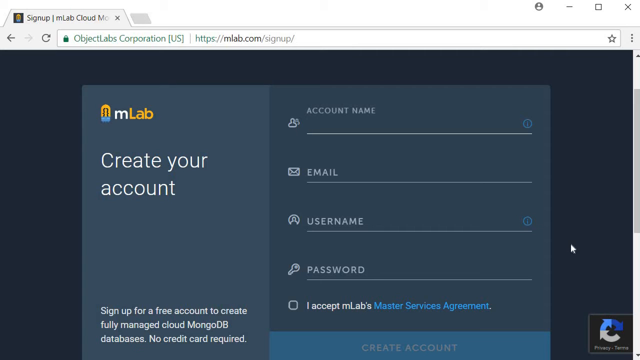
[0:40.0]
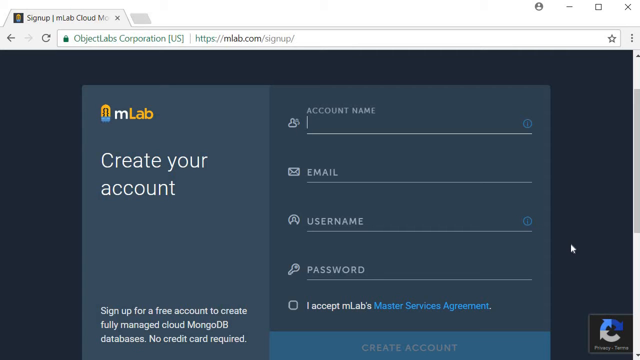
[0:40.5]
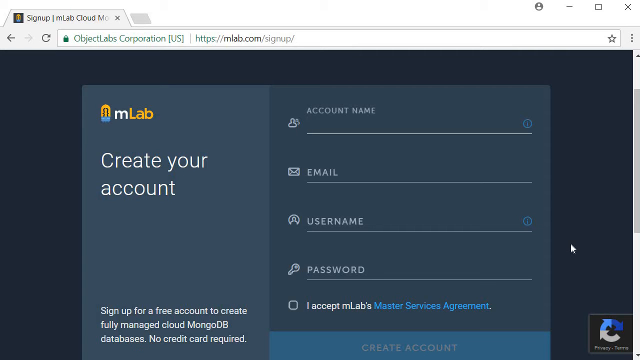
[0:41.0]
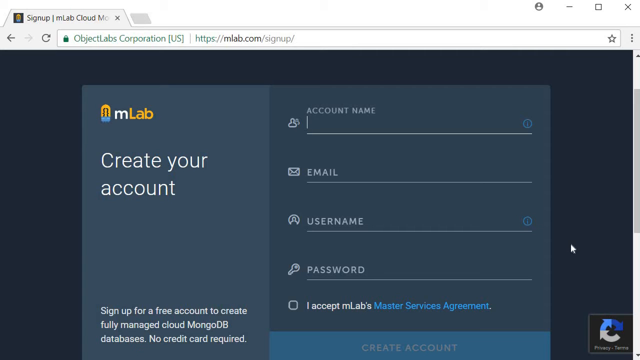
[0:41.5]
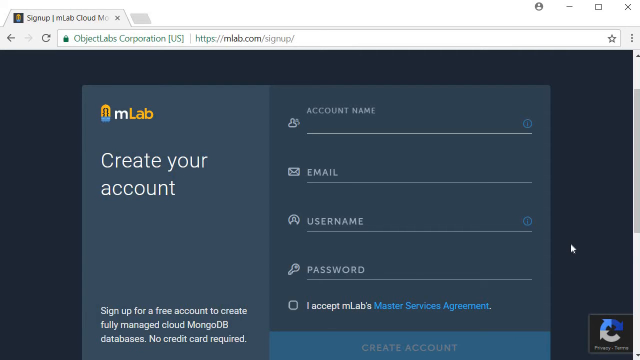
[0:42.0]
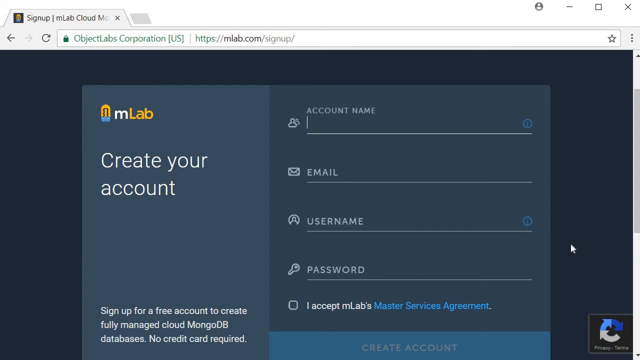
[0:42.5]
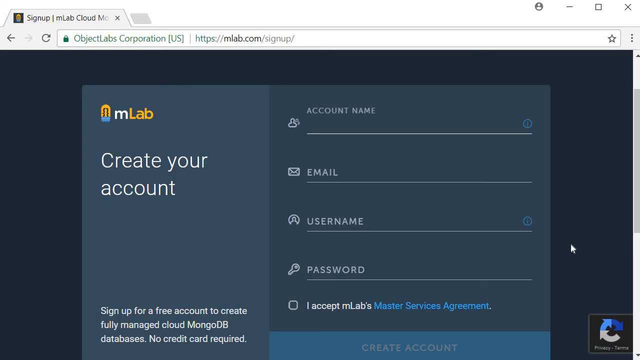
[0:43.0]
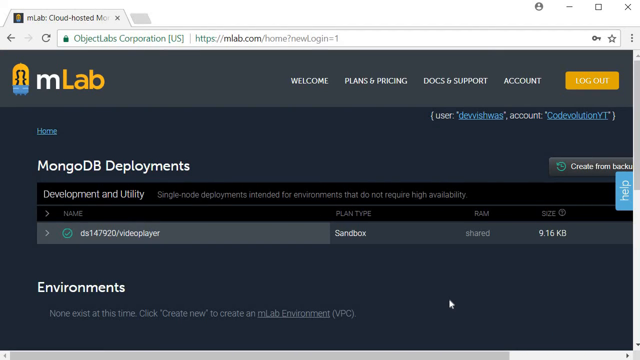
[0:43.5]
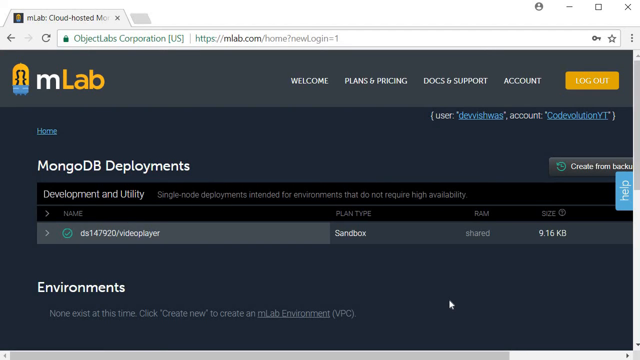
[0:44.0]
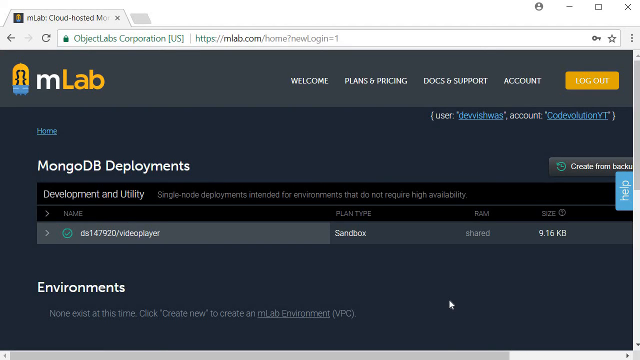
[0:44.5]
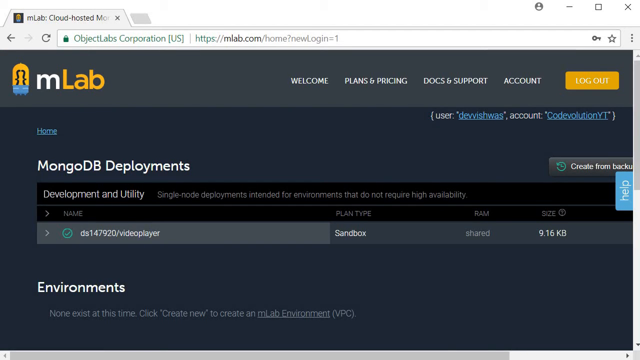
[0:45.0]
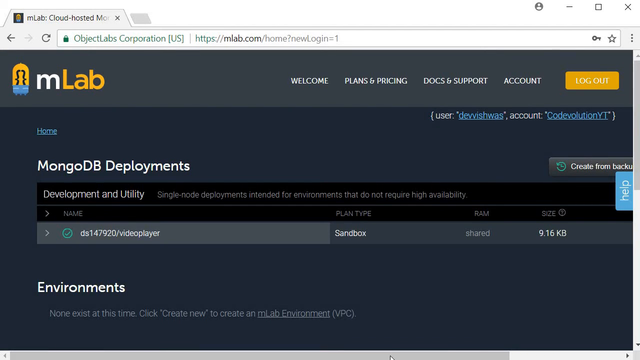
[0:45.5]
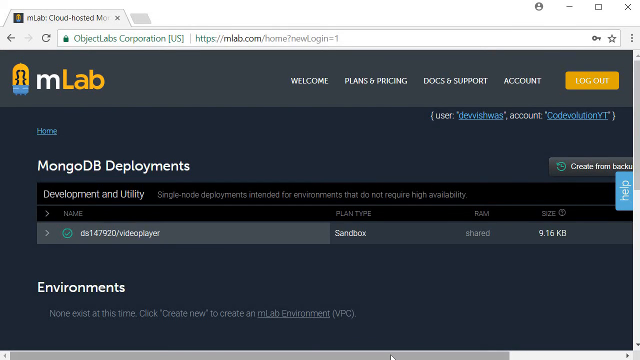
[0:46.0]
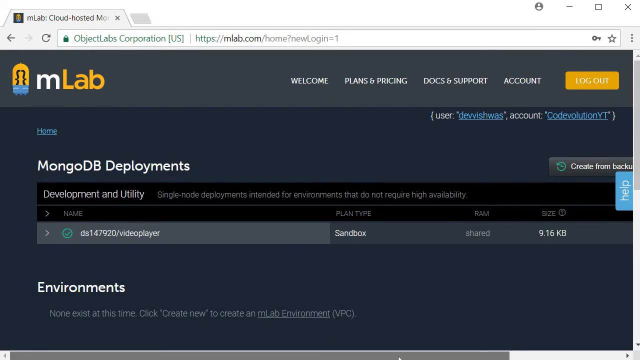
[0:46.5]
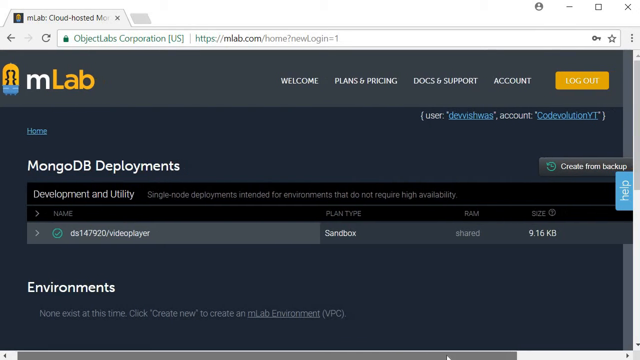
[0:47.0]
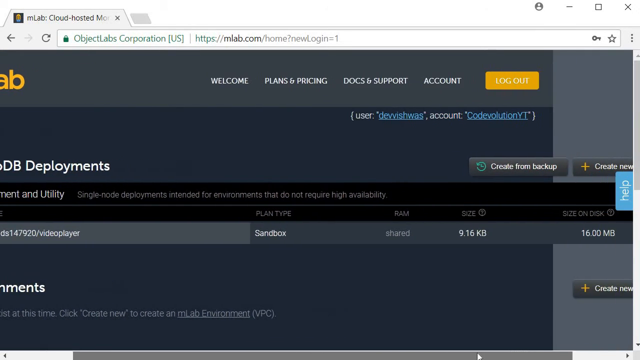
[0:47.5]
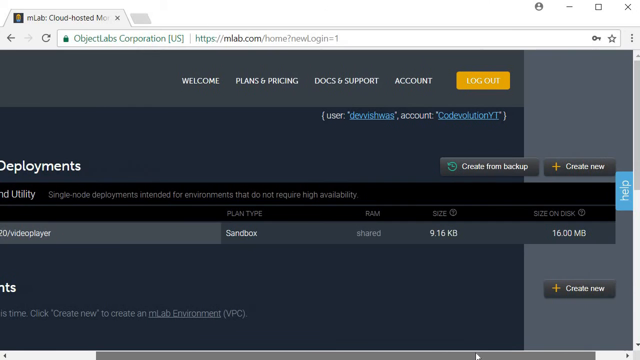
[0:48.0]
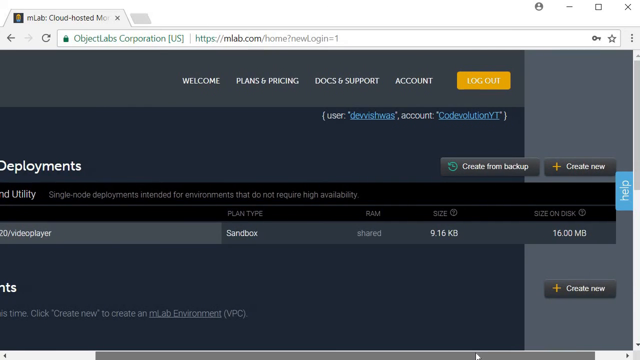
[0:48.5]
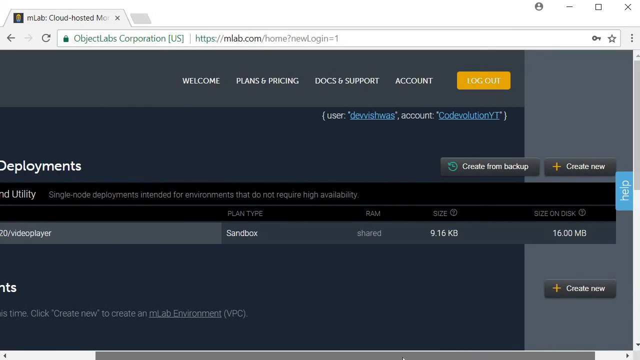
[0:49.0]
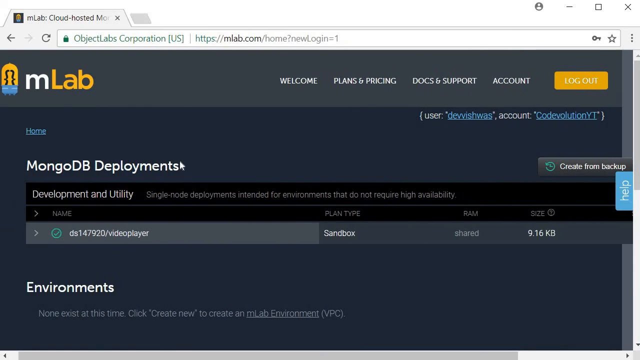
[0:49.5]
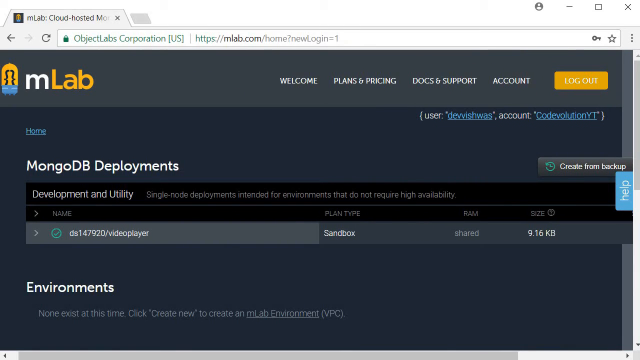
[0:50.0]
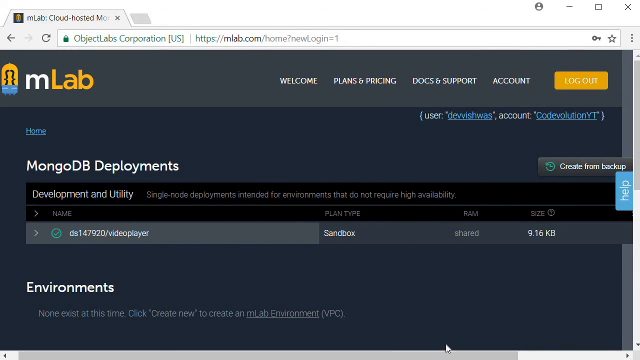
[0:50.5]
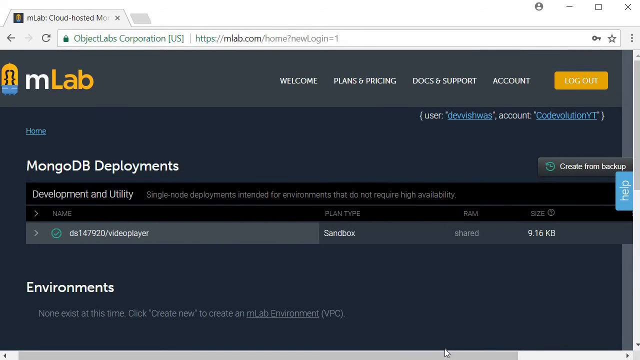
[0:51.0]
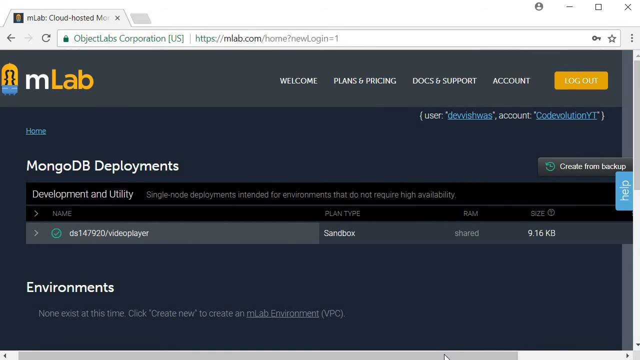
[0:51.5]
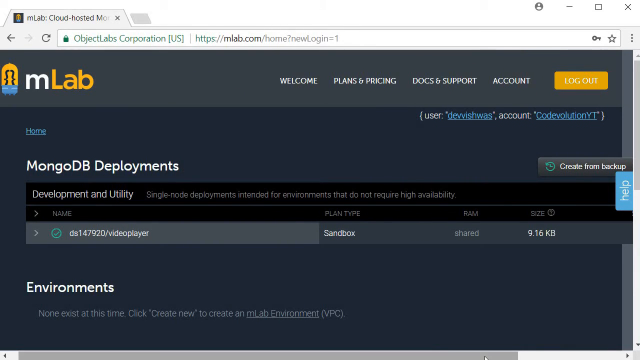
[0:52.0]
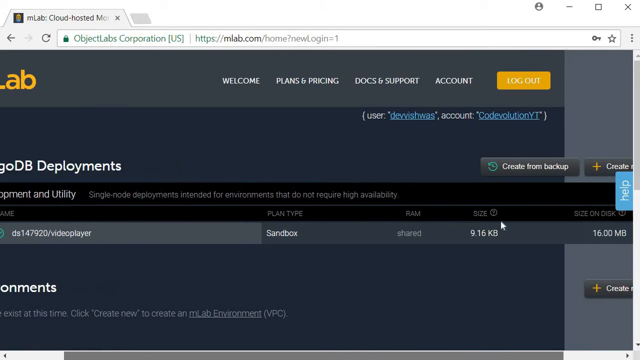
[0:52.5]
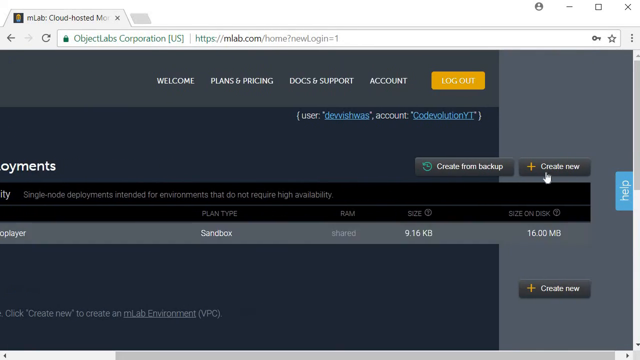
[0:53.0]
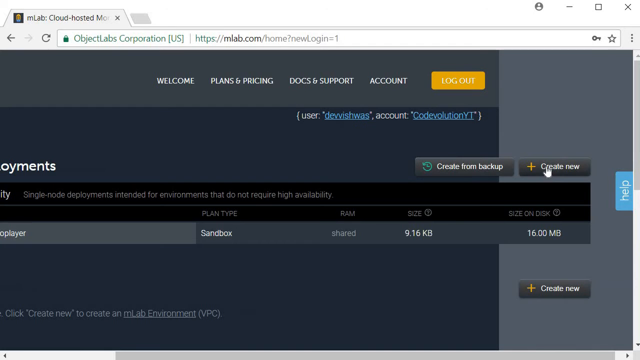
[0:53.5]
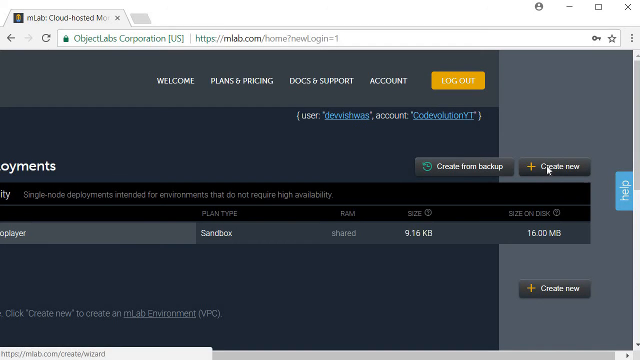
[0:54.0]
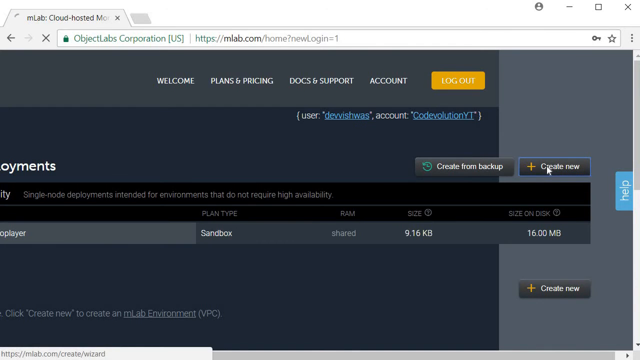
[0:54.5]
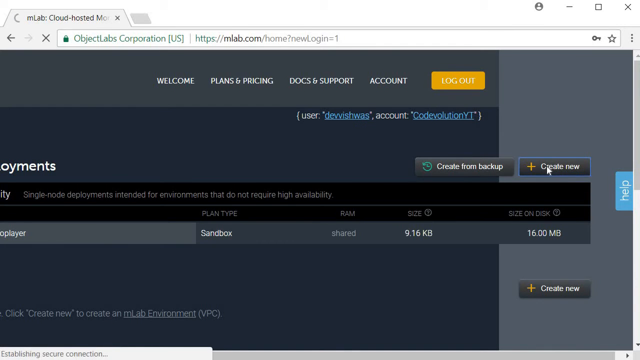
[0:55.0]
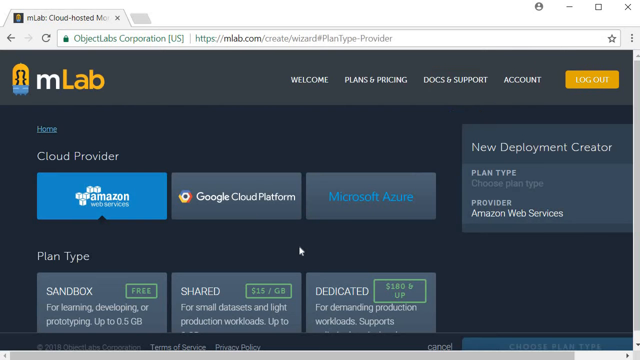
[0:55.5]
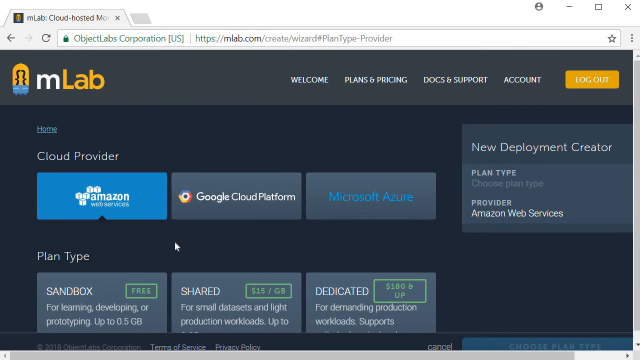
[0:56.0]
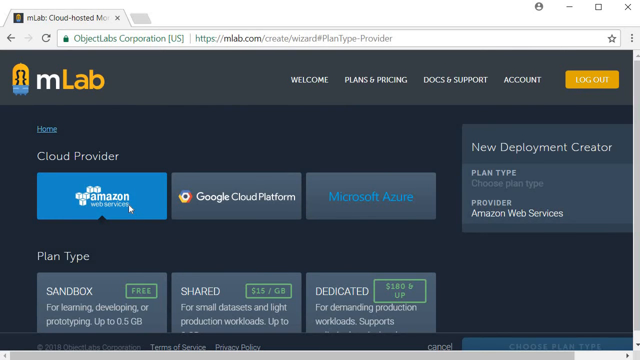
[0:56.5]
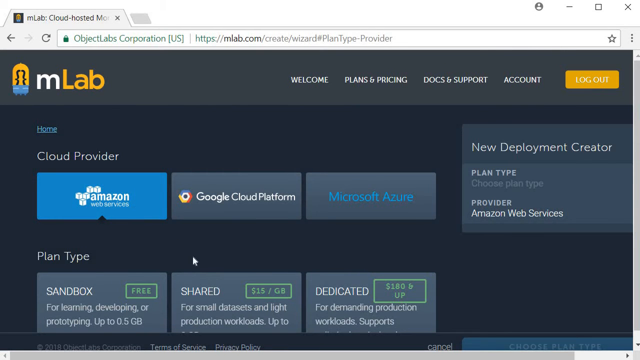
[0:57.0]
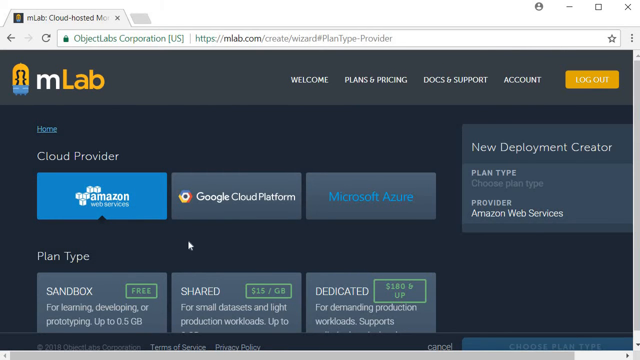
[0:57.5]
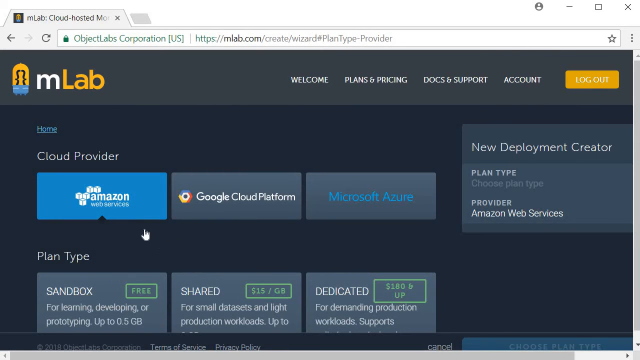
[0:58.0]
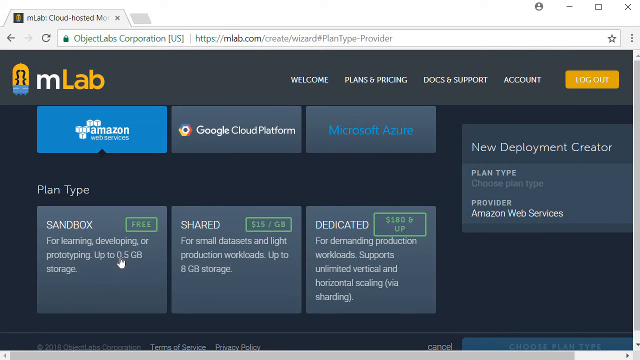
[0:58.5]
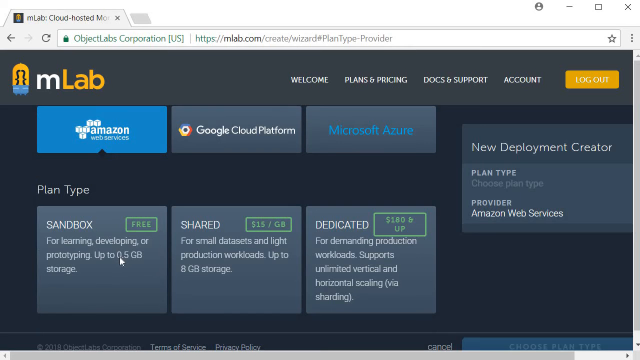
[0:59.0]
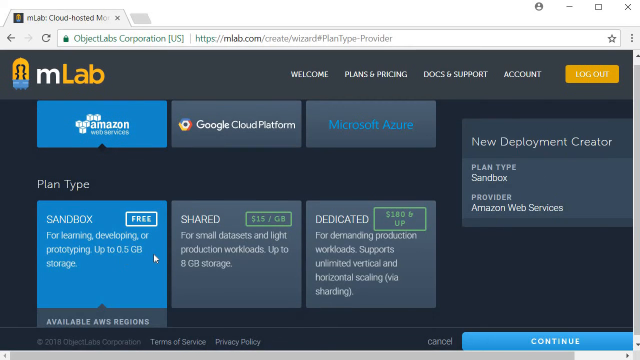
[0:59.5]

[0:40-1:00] A browser on a computer shows the MLAB signup page. The URL reads "https://mlab.com/signup/". The background is dark blue, and the square in the middle is in two different shades of gray, with the words "create your account" on the left and the fields to fill out on the right: account name, email, username and password. The video lingers on this frame for a few seconds, then jump cuts to another part of the MLAB website, a home site with a gray bar at the top, the MLAB logo in the upper left and a yellow logout button in the upper right. Beneath this, white text reads "MongoDB deployments". Below that is a black box containing the text "development and utility", and next to it, "single node deployments intended for environments that do not require high availability." Underneath are several numbers and a column indicating that the plan type is sandbox and that the RAM is shared. The user scrolls slightly to the right, revealing the rest of the black box; the remaining columns show size and size on disk, 9.16 kilobytes and 16 megabytes. Above the black box on the far right are two gray buttons, one reading "create from backup" and, next to it, "create new". The user clicks the Create New button on the far right. The next screen has the MLab logo at the top left in the gray bar, as before, and beneath it two rows of three squares, each row labeled with white text above it. The first is "Cloud Provider", with three boxes below: Amazon in blue, Google Cloud Platform in gray and Microsoft Azure also in gray. Below this, white text reads "Plan Type", with three similarly sized gray boxes reading Sandbox, Shared and Dedicated, each with a price next to it: Sandbox free, Shared $15 per gigabyte and Dedicated $180 and up. The cursor scrolls down and clicks on Sandbox.